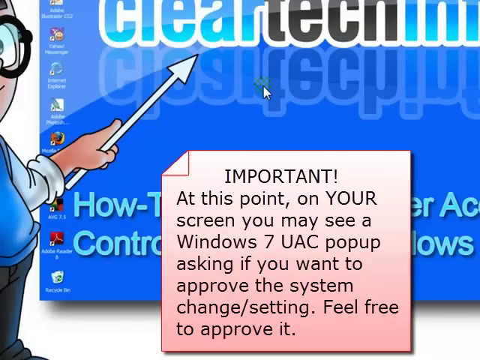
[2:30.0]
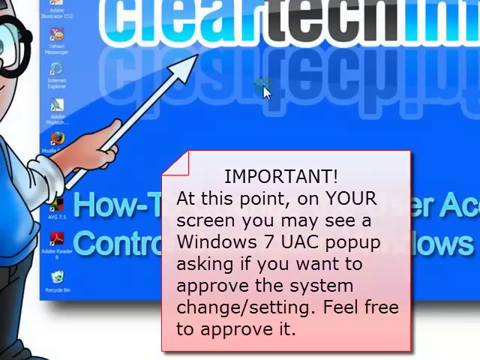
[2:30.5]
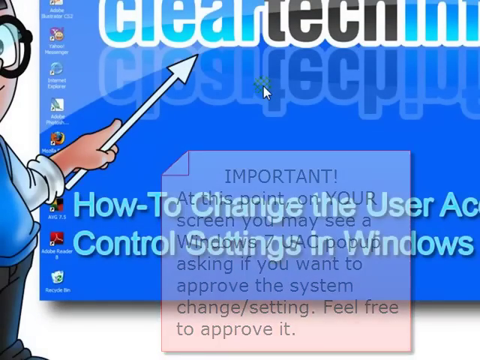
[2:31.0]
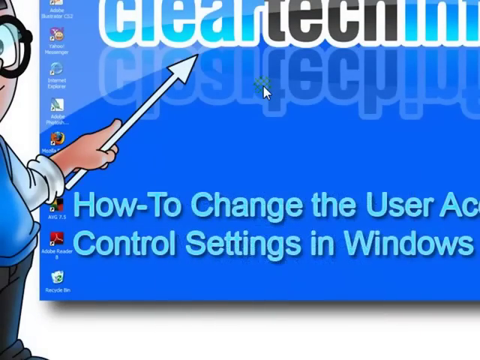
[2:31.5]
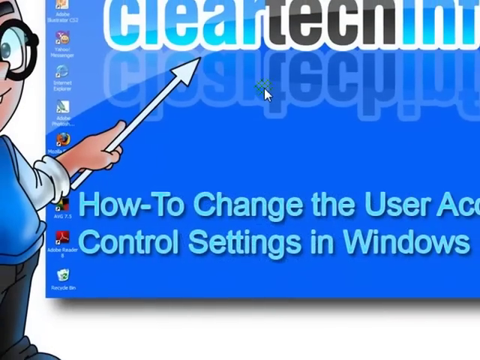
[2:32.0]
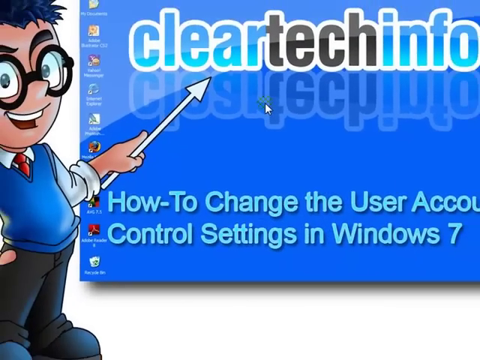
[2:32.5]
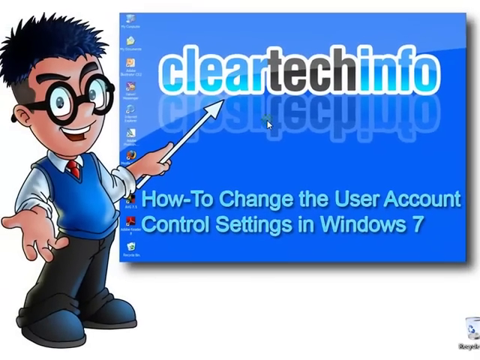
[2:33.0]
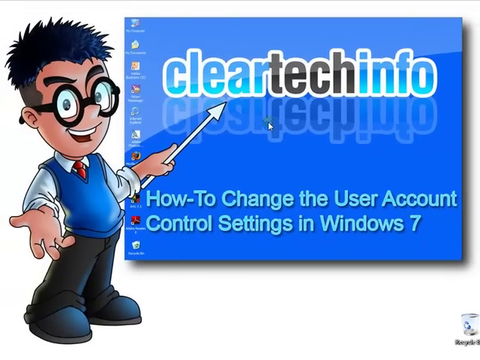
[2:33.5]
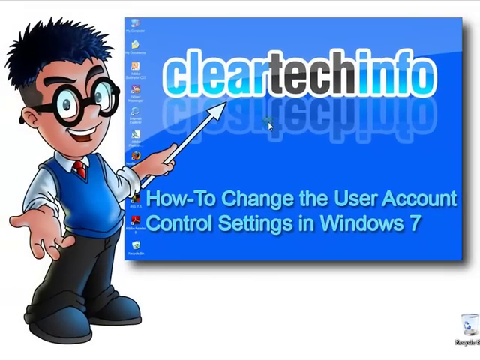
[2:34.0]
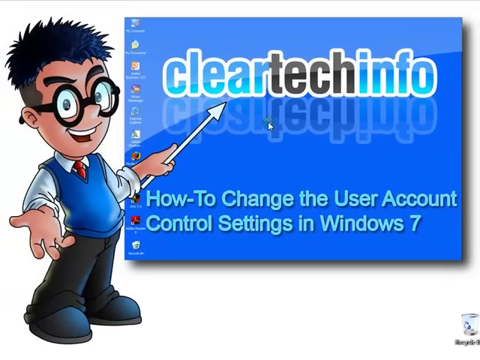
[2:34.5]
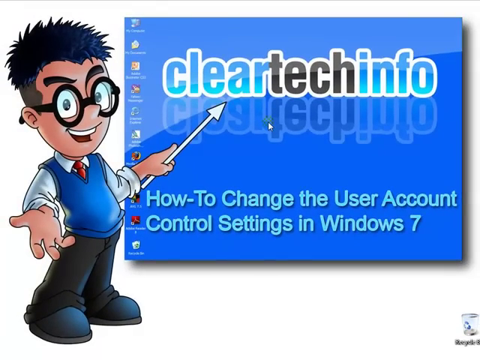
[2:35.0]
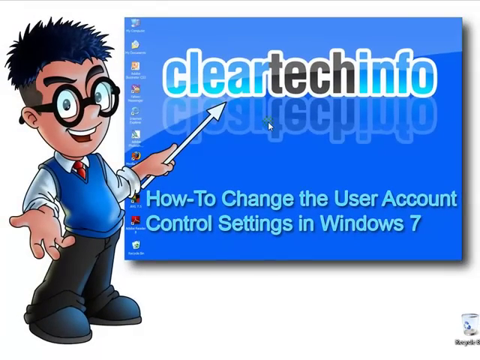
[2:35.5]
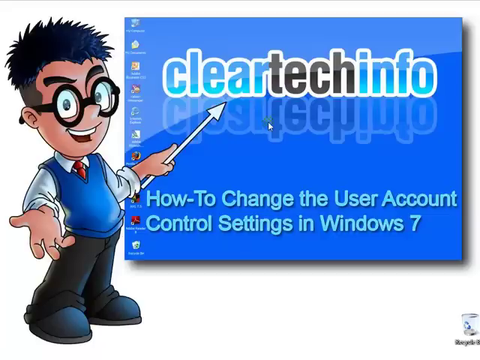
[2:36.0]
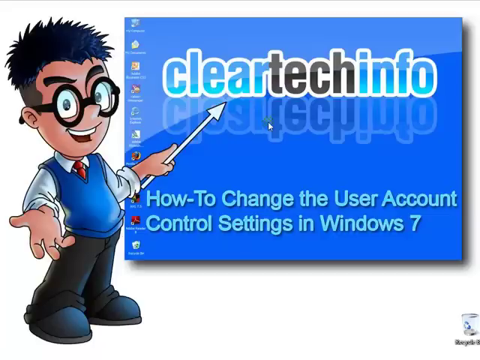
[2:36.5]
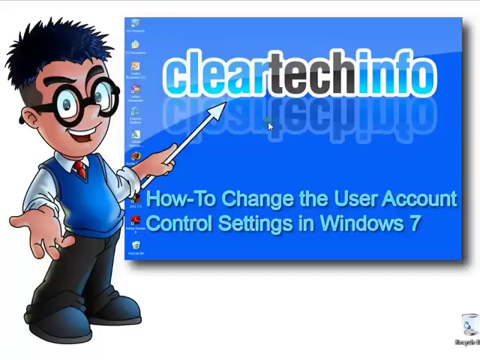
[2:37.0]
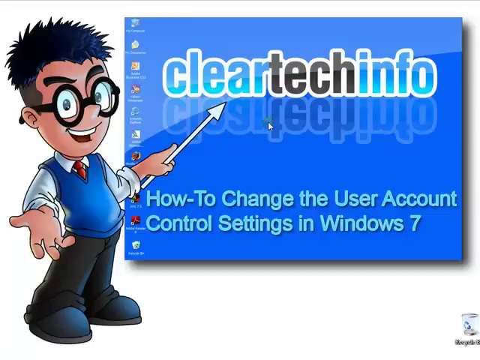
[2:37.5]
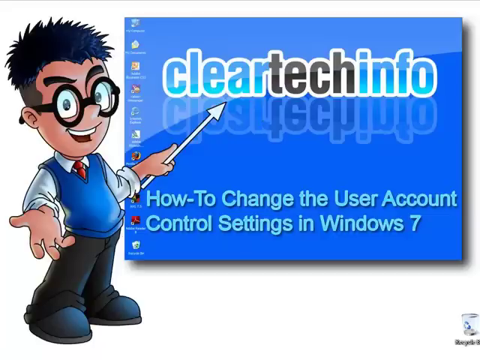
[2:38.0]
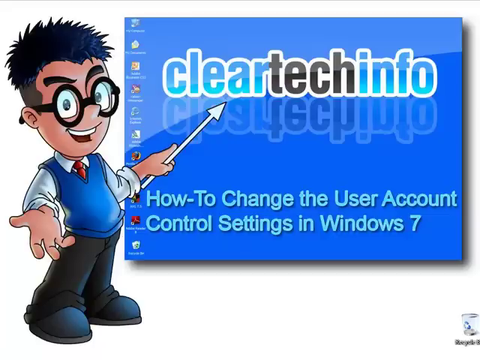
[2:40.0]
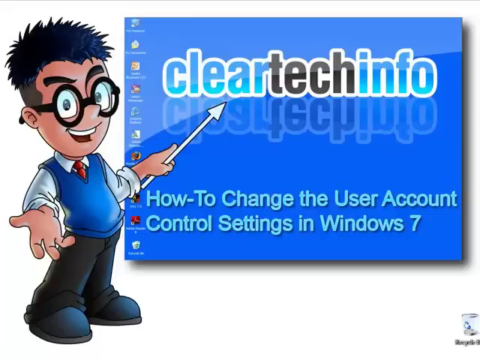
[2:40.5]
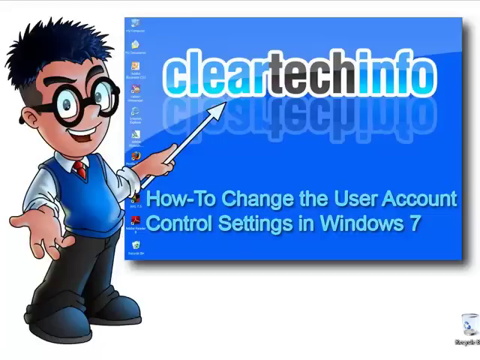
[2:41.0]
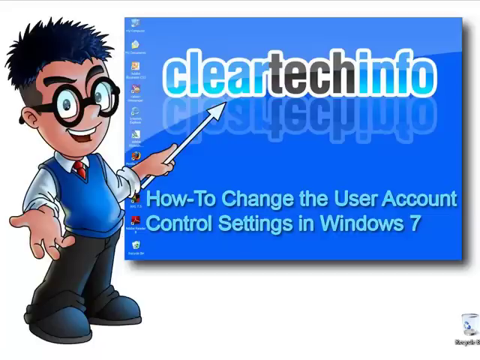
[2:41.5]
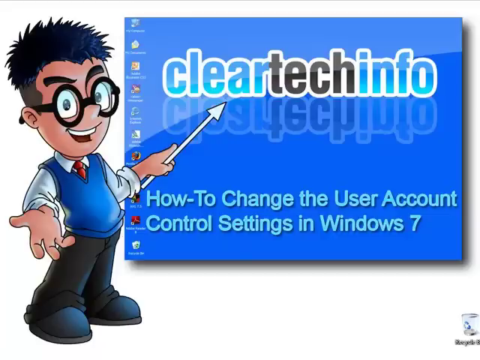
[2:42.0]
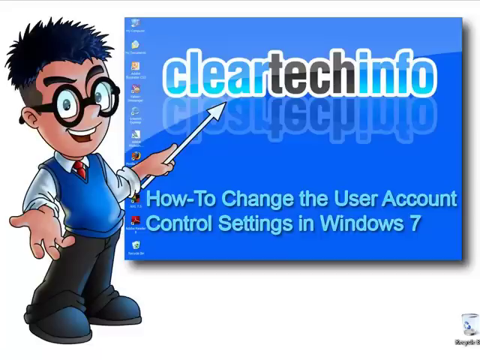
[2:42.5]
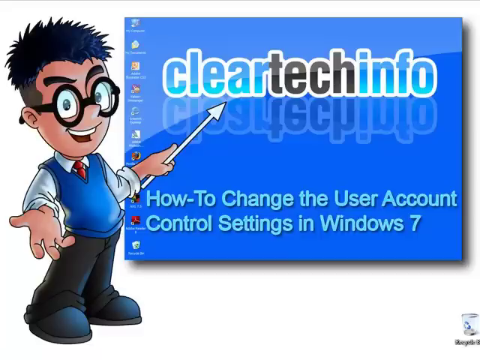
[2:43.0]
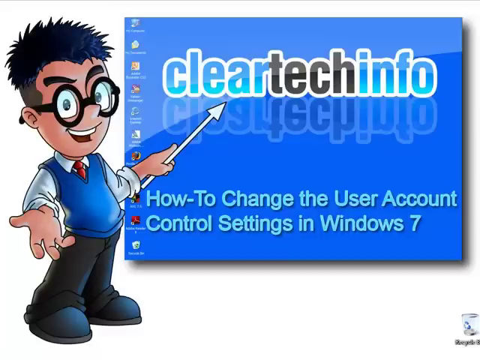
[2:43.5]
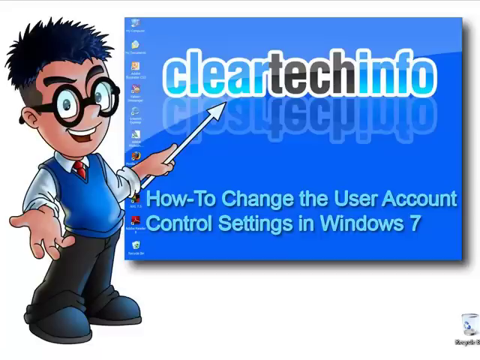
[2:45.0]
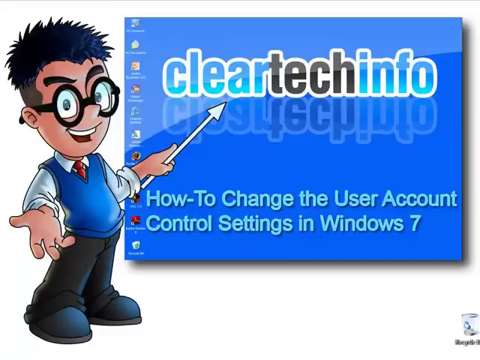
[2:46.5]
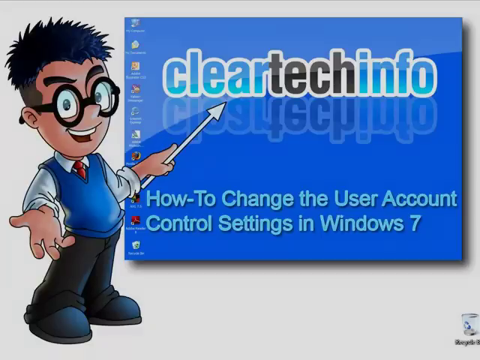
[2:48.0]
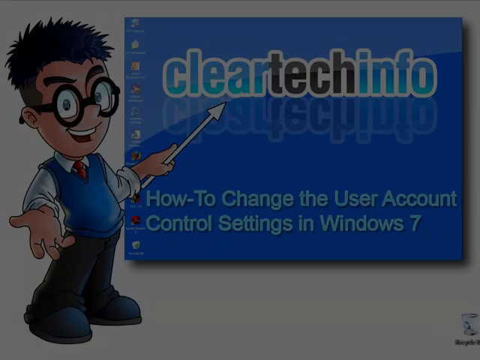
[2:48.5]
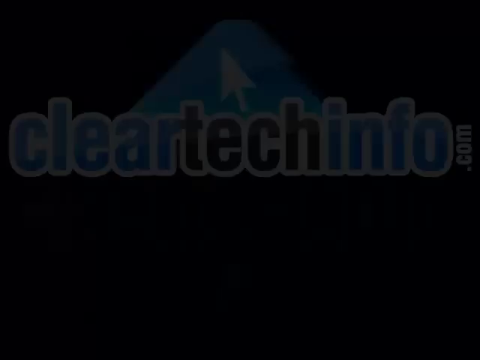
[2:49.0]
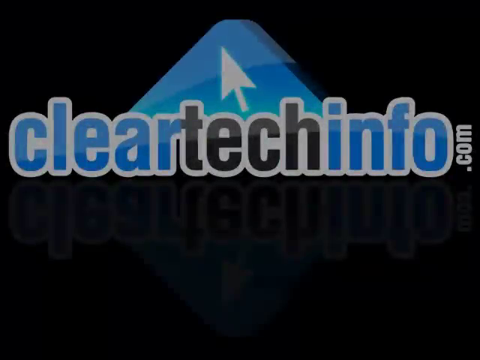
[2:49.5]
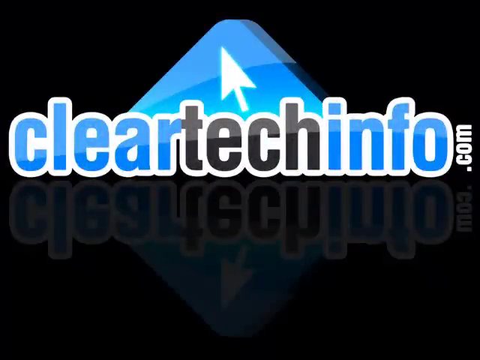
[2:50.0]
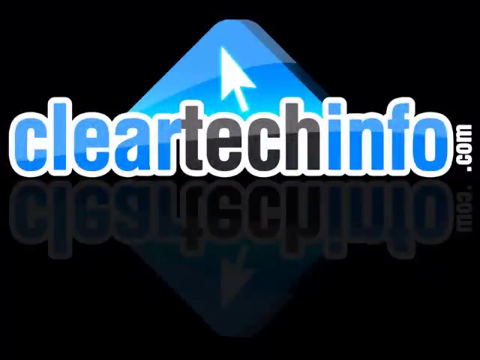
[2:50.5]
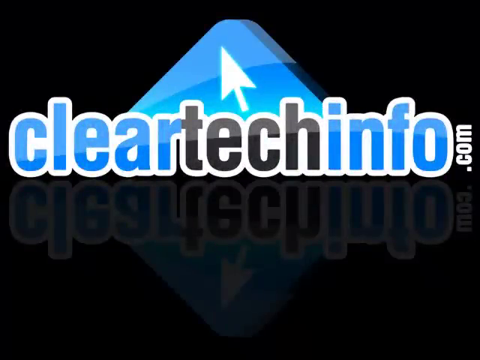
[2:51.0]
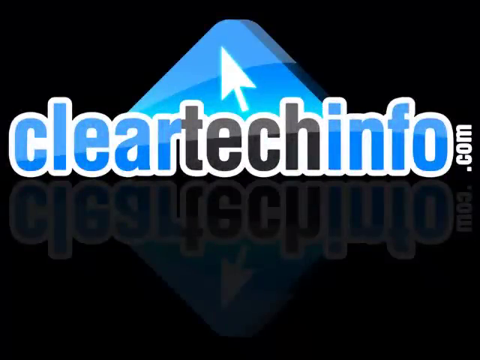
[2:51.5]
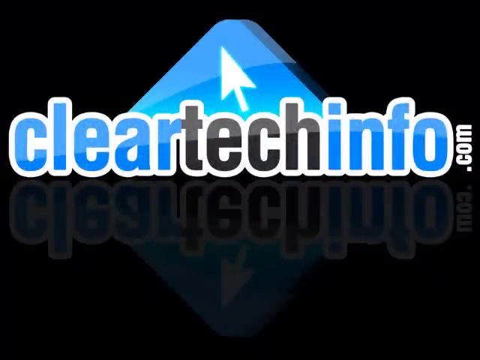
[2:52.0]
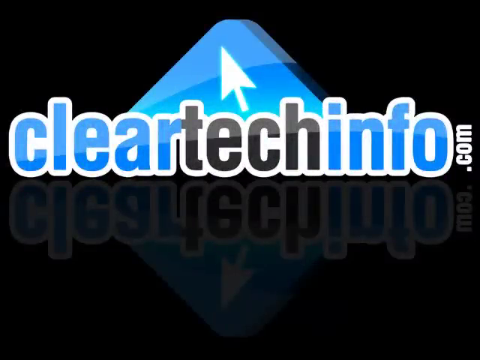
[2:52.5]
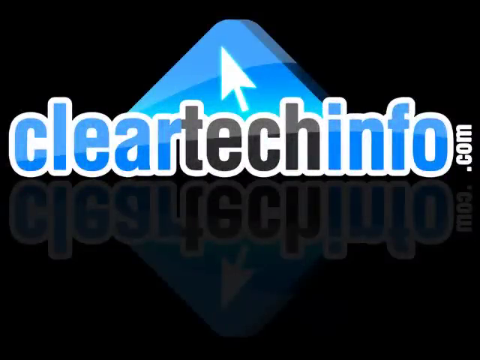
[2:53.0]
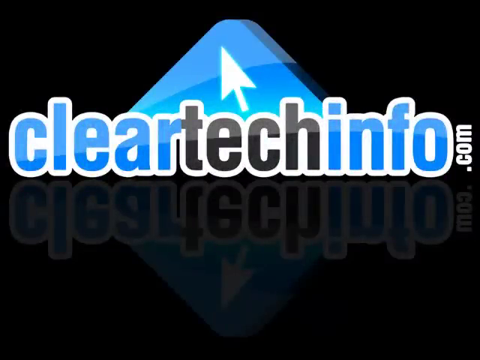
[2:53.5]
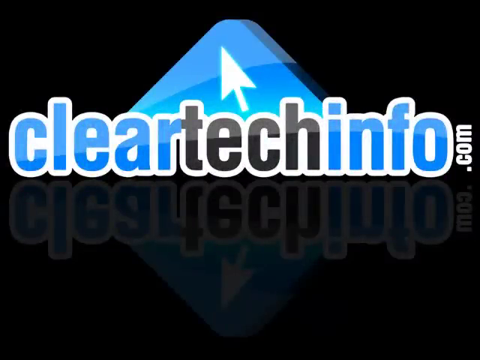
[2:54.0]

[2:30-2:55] The view returns to the Windows 7 blue screen with the Clear Tech Info logo and the little cartoon nerd with purple hair on the left-hand side. The view pulls out, revealing white space around him on the left and bottom, and appears to hold there. At the end, a pop-up appears on a black background showing "cleartechinfo.com", with "clear" in blue, "tech" in black, "info" in white, and ".com" written vertically in white in a much smaller font on the right-hand side. Behind "tech" there is a pointy, triangular, curved mountain with a big white mouse cursor in the center.